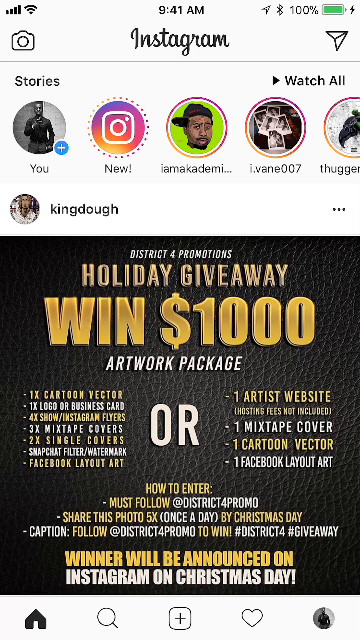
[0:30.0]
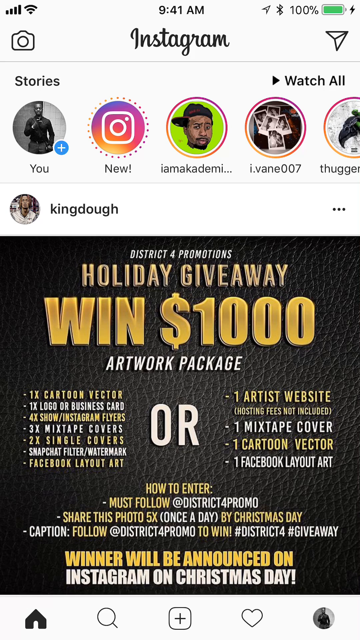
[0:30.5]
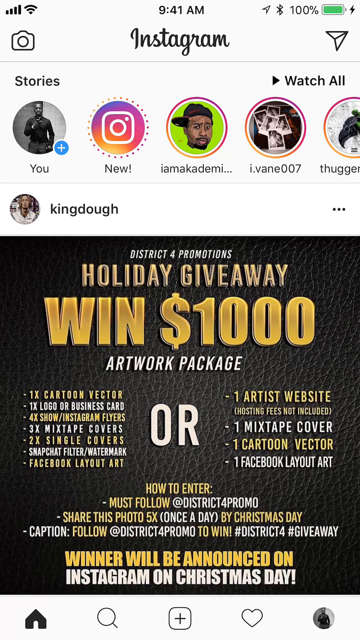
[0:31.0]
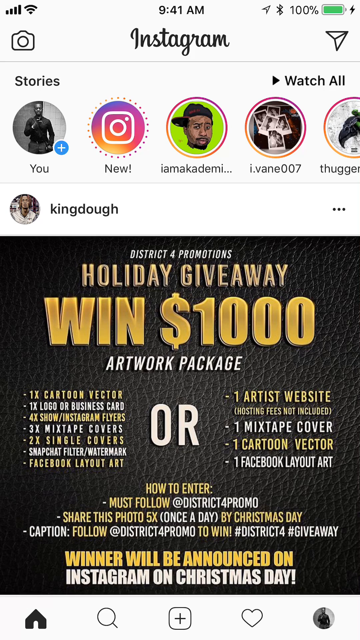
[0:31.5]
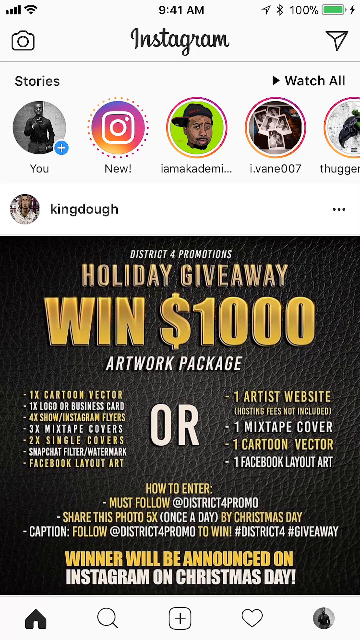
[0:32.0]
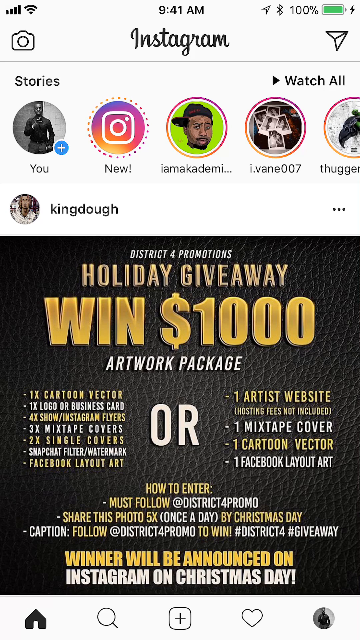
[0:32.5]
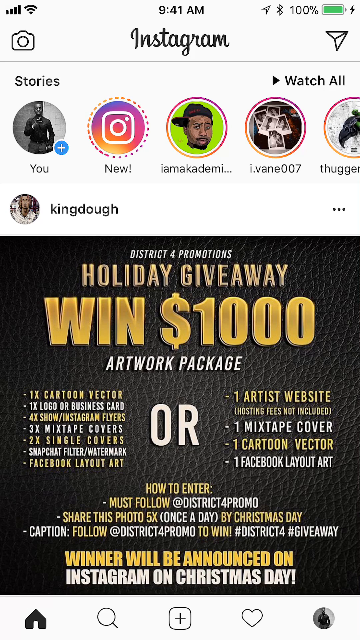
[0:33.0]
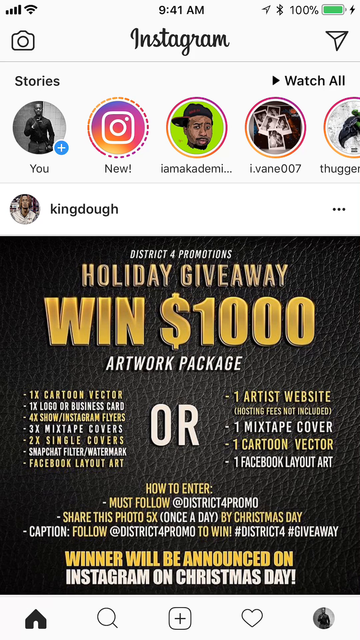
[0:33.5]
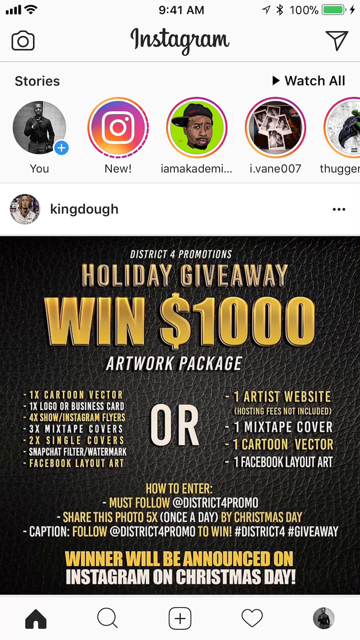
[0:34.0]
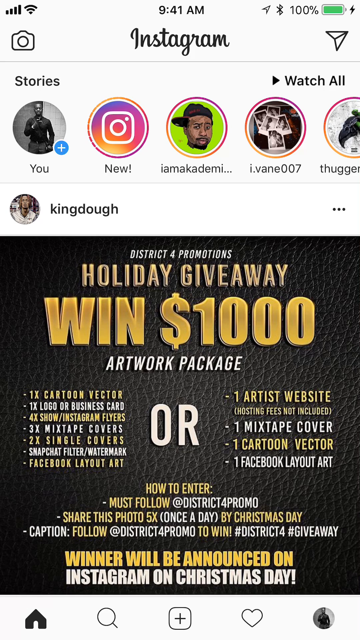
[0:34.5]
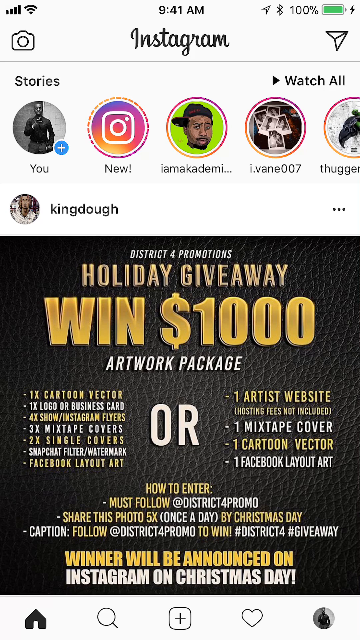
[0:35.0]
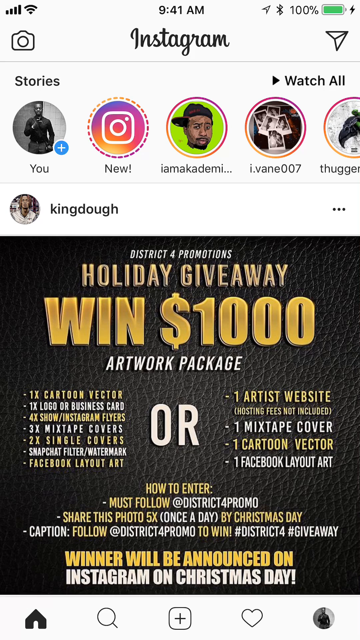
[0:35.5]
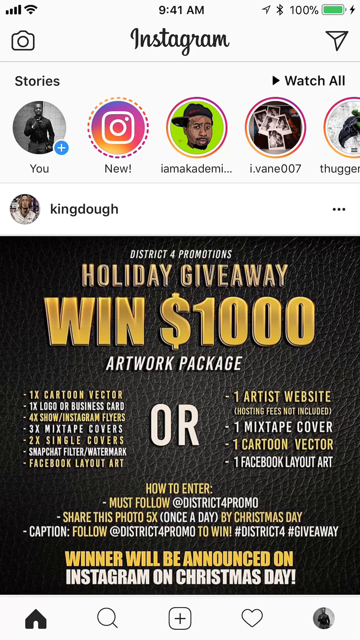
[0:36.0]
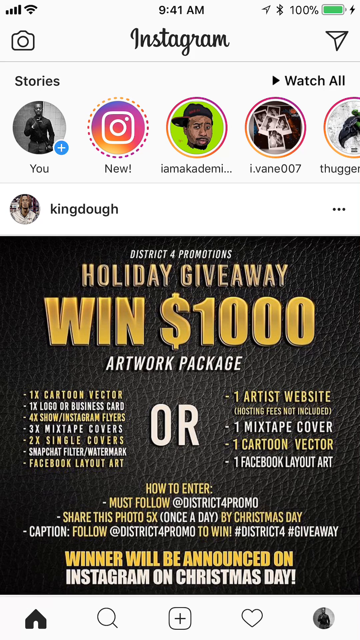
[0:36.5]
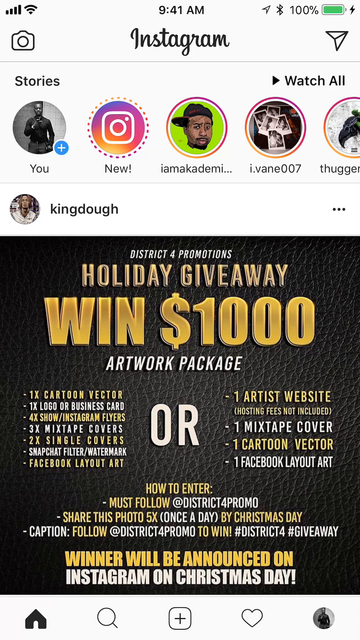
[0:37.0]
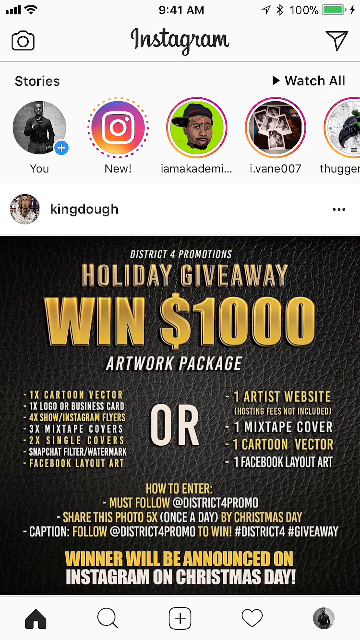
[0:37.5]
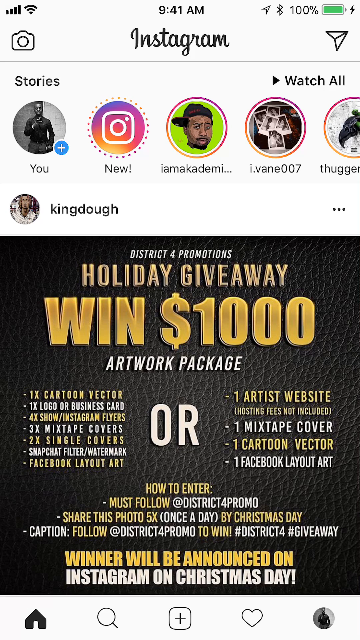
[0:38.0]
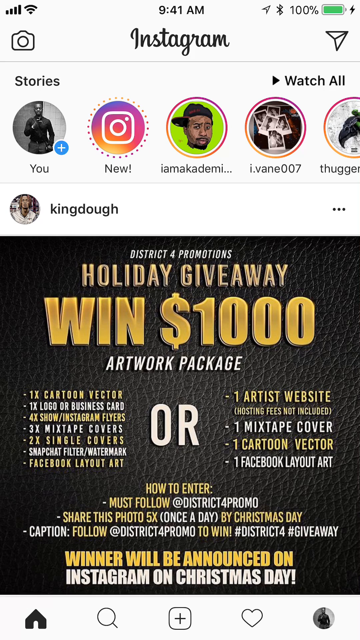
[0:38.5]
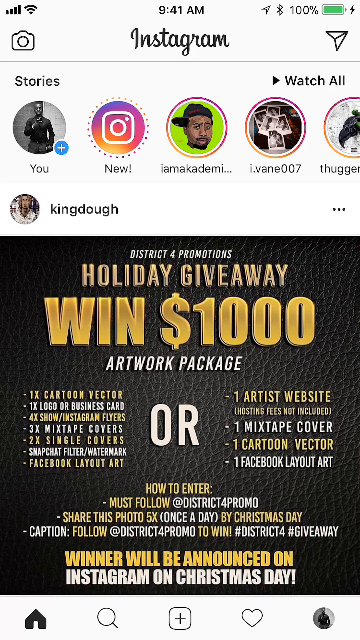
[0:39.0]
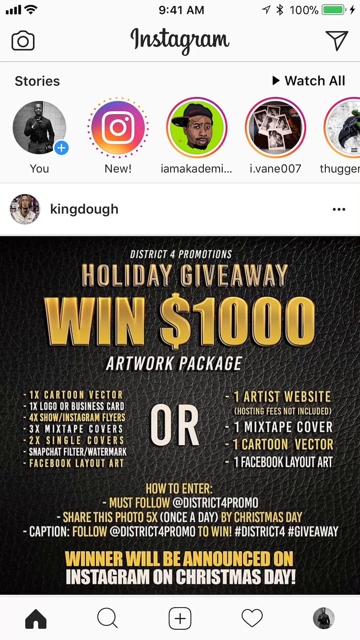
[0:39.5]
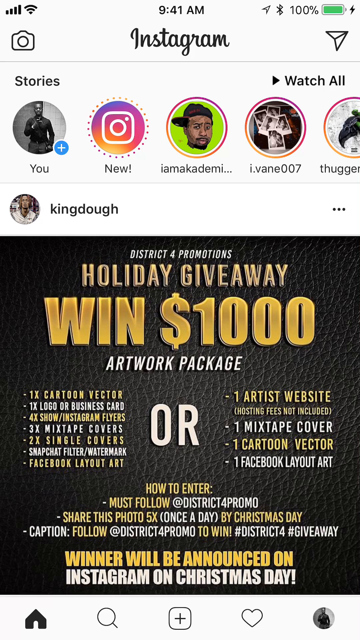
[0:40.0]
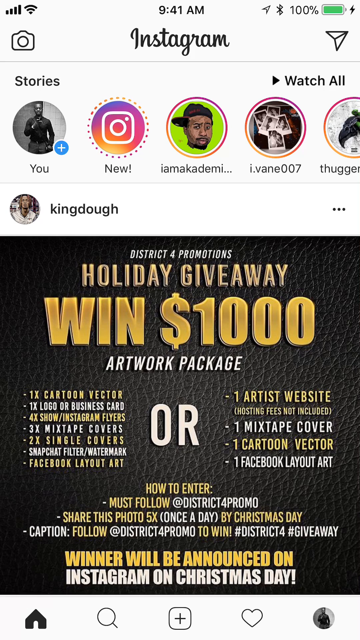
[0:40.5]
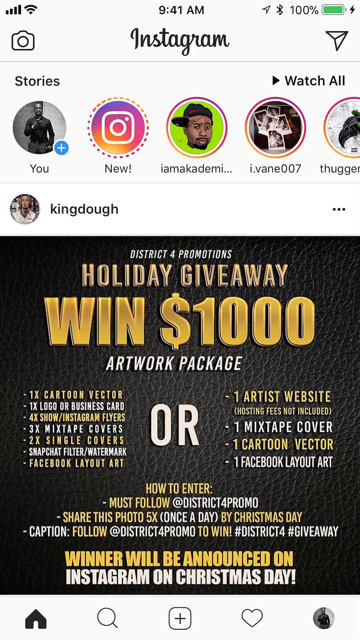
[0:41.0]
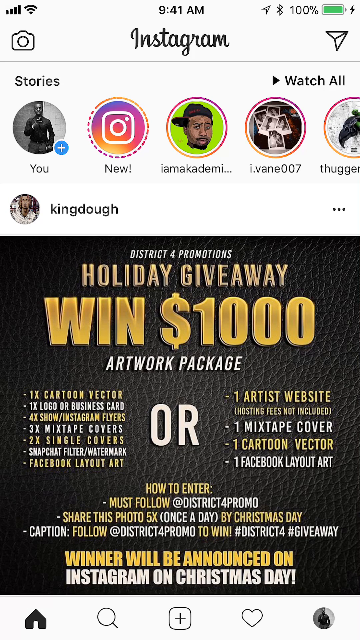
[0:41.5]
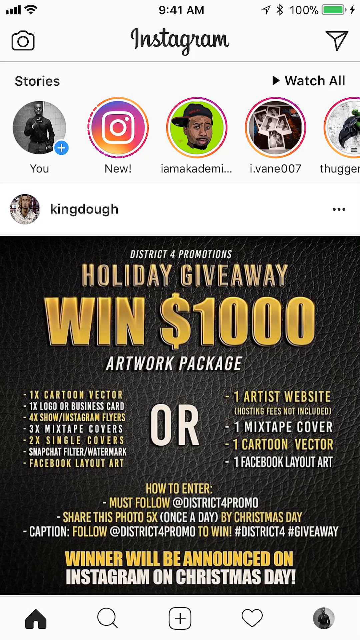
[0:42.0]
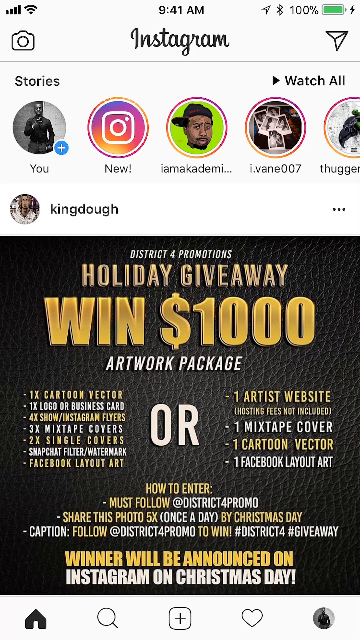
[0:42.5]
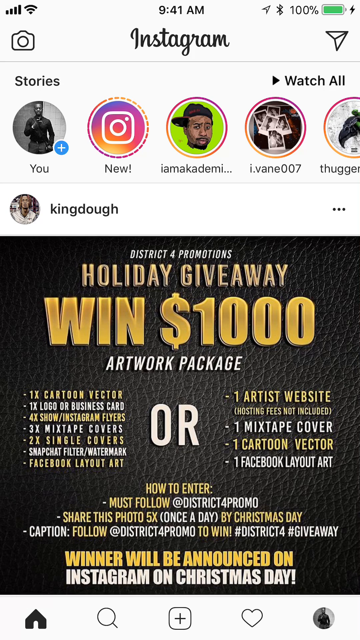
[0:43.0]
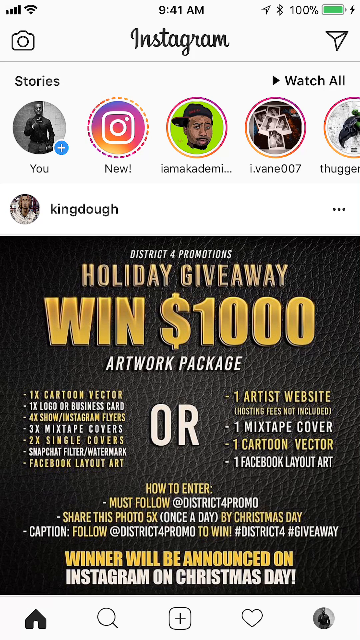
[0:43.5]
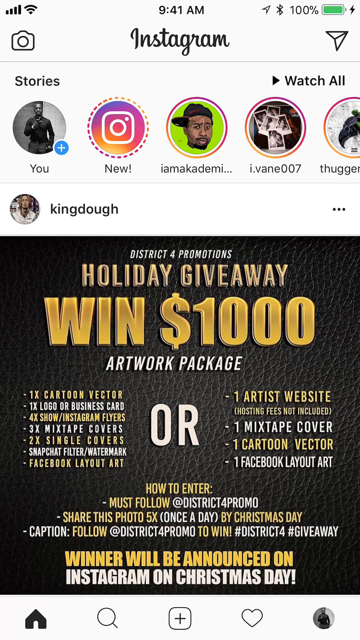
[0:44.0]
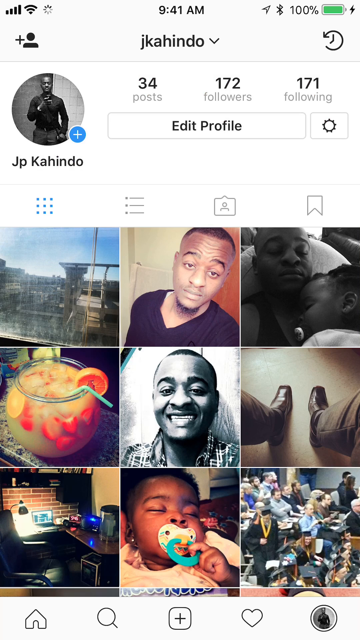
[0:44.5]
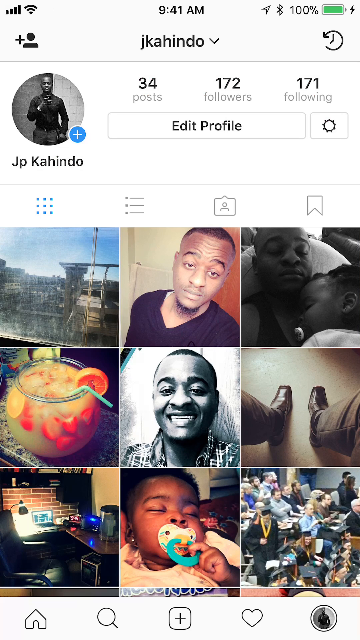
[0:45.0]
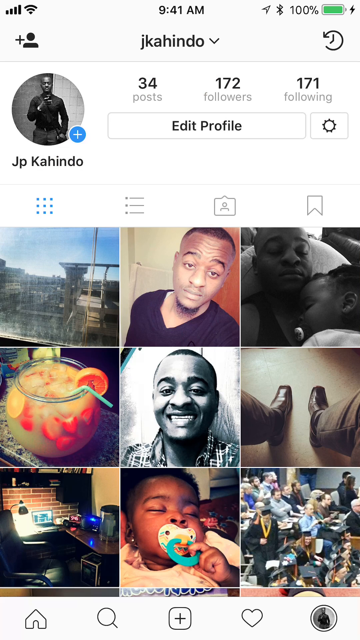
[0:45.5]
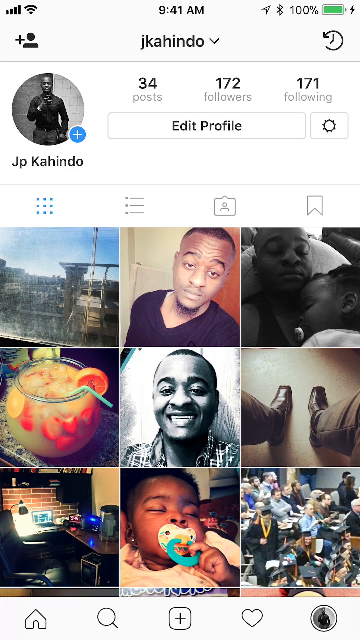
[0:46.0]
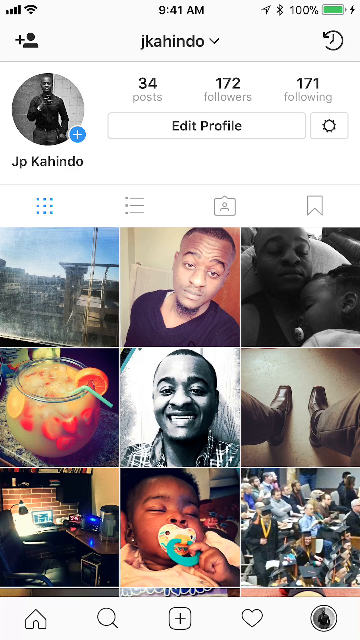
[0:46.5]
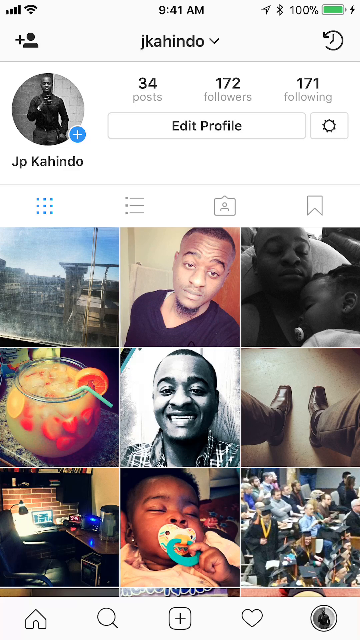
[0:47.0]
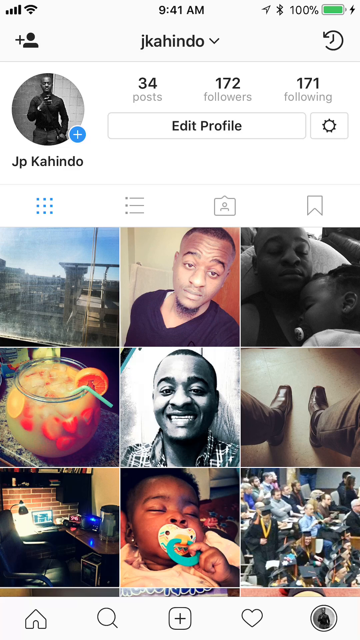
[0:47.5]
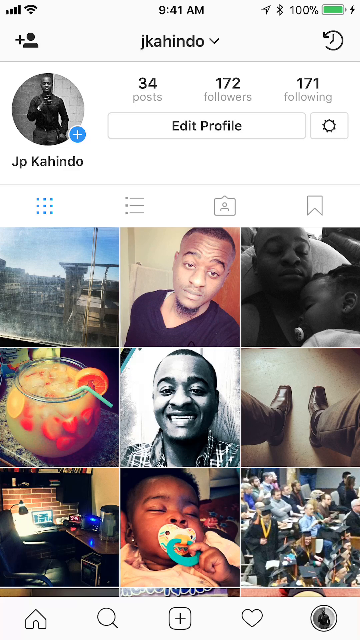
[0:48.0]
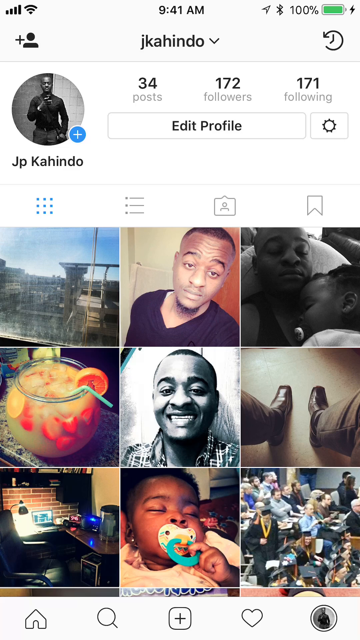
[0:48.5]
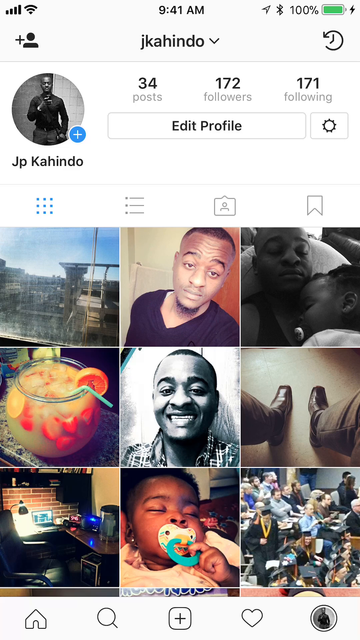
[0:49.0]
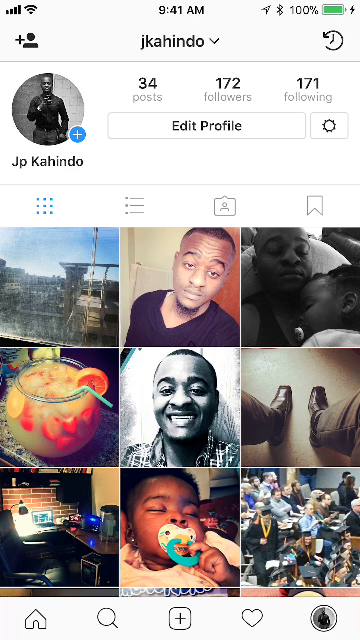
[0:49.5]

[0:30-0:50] The mobile recording shows the main front page of Instagram as it appears when the app is opened, with a white background. The Instagram wordmark is at the top, with the story panels underneath containing unopened stories. Below that is a post from an account, King Joe, advertising a holiday giveaway. The post's picture has a black background with the words "holiday giveaway win $1000" at the top and a subtitle underneath that says "artwork package". Beneath that, on the left, it lists several things you can win; in the middle is the word "or"; and on the right are several other things you can win. Underneath are directions on how to enter, and at the very bottom it says when the winner will be announced on Instagram on Christmas Day. The text alternates between gold and white. The video then transitions to the profile page of the person, whose name is J.P. Kahindo. It shows 34 posts, 172 followers, 171 following, and nine posts displayed. Most are selfies of himself, along with a picture of a baby and some vintage-like photos of drinks and outdoor scenery.